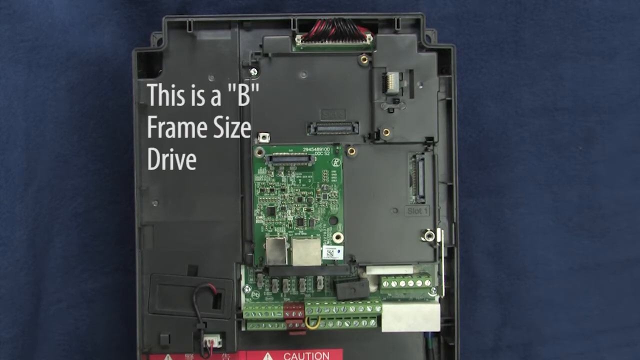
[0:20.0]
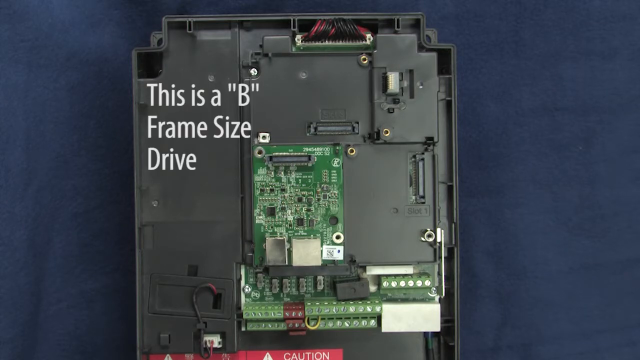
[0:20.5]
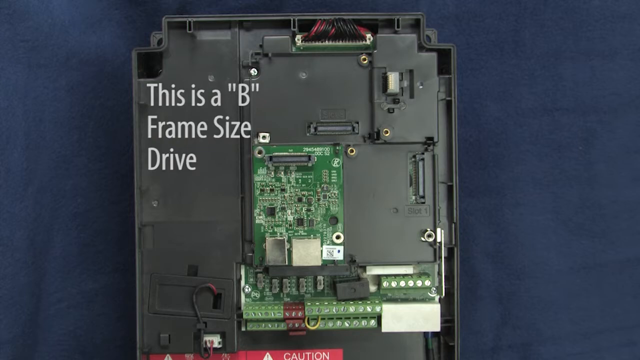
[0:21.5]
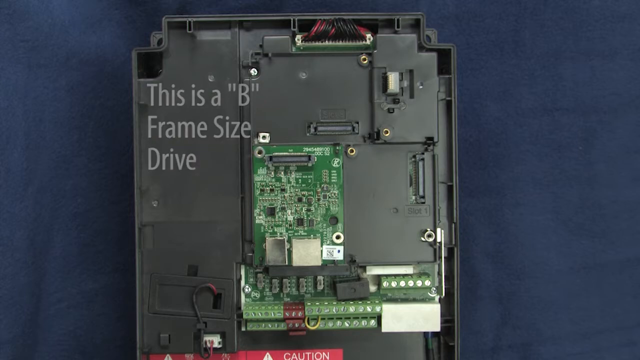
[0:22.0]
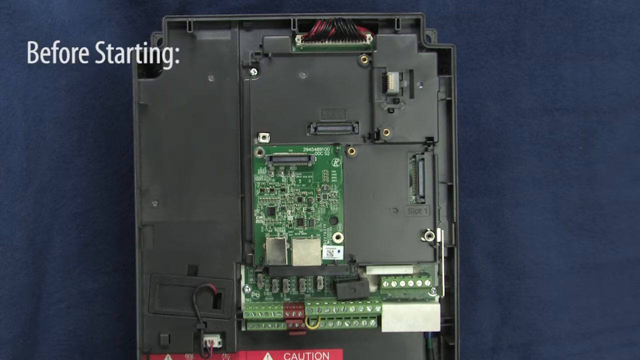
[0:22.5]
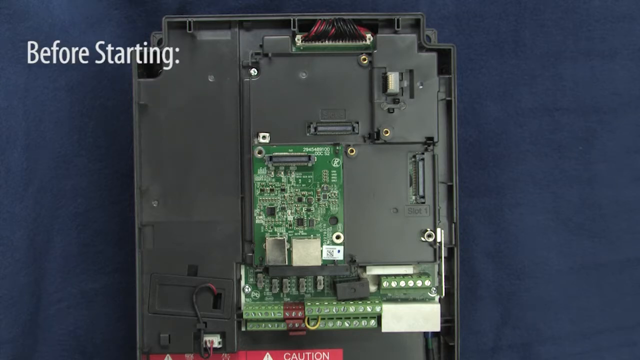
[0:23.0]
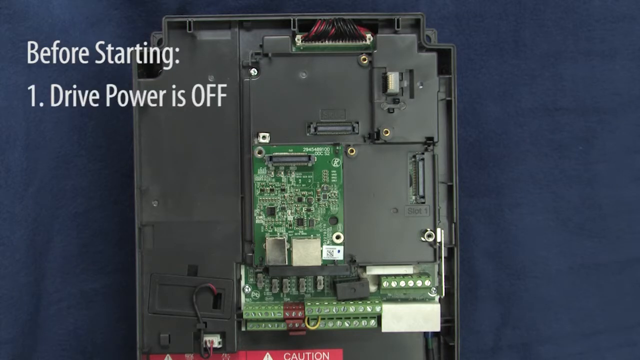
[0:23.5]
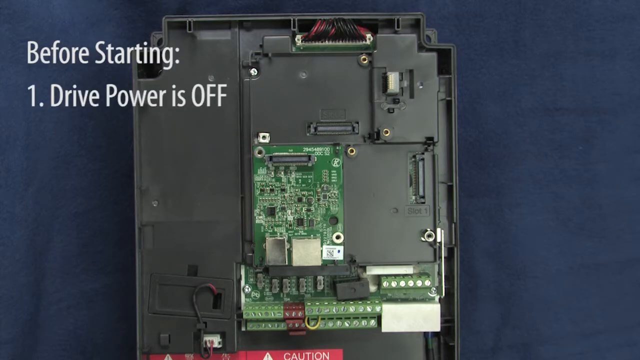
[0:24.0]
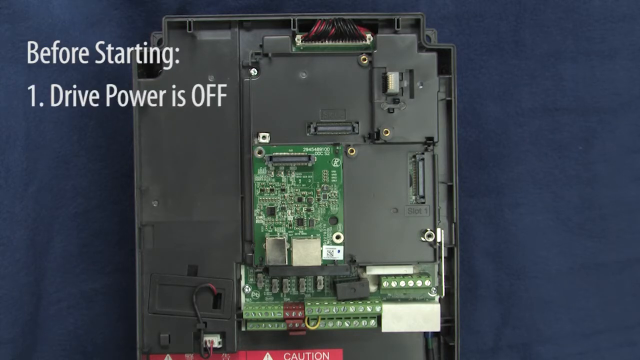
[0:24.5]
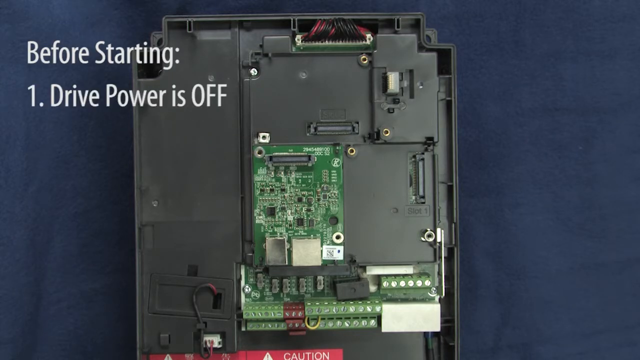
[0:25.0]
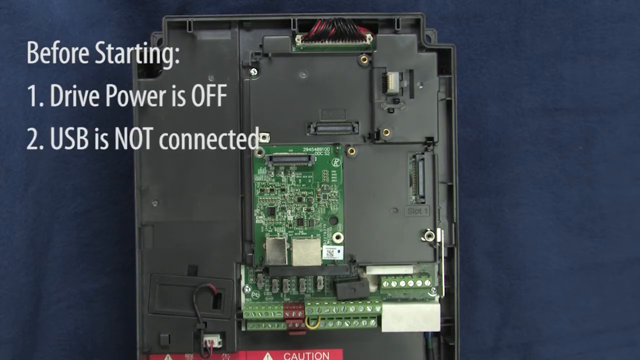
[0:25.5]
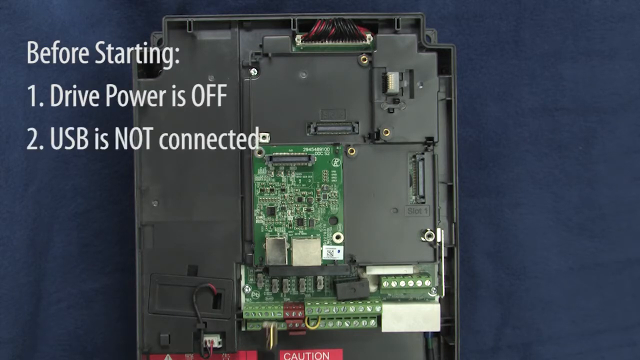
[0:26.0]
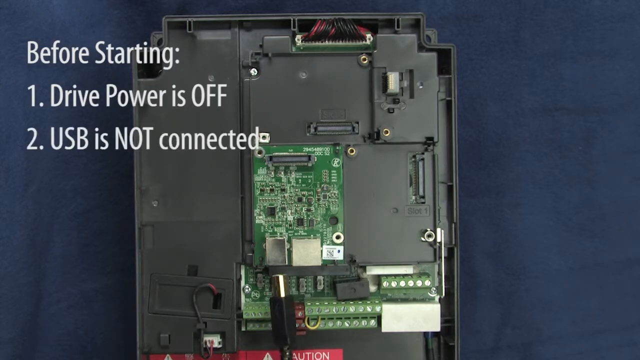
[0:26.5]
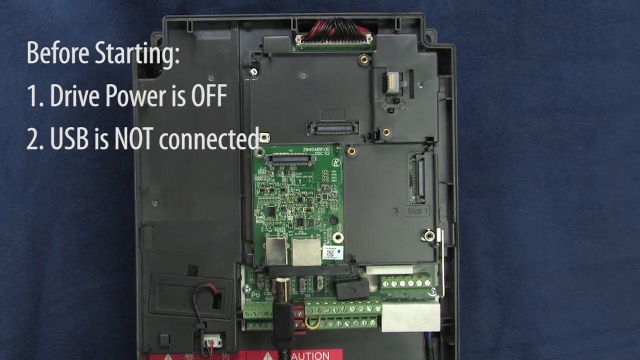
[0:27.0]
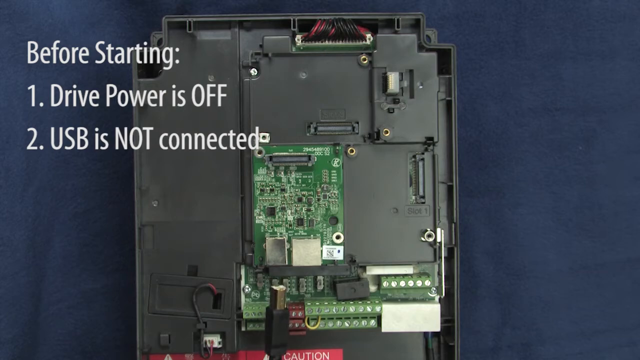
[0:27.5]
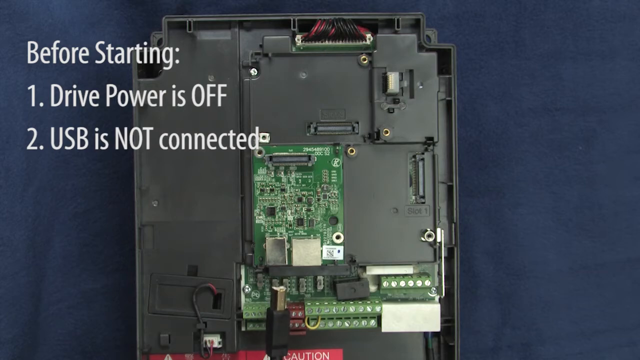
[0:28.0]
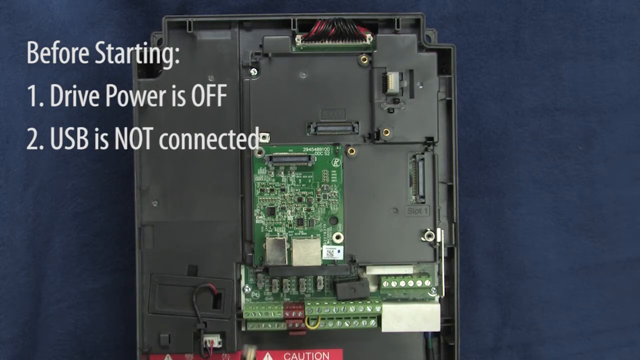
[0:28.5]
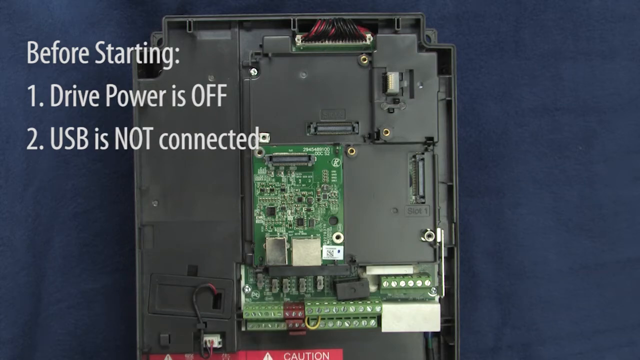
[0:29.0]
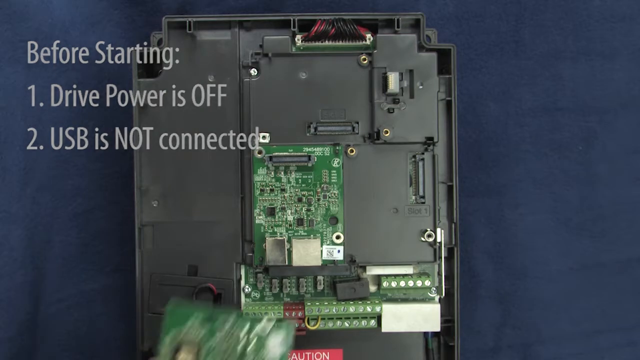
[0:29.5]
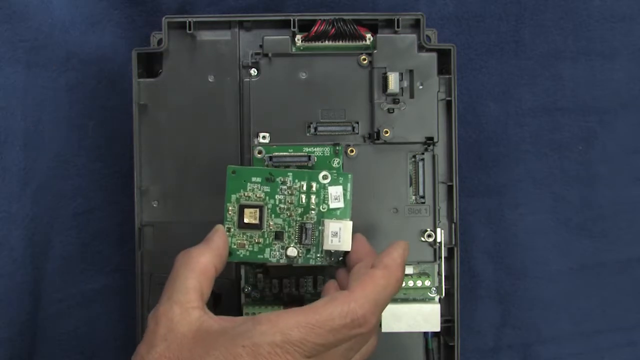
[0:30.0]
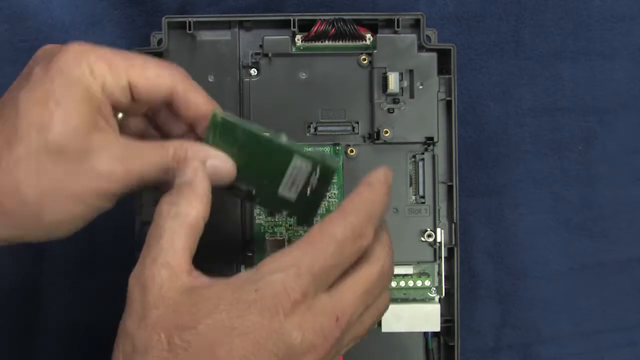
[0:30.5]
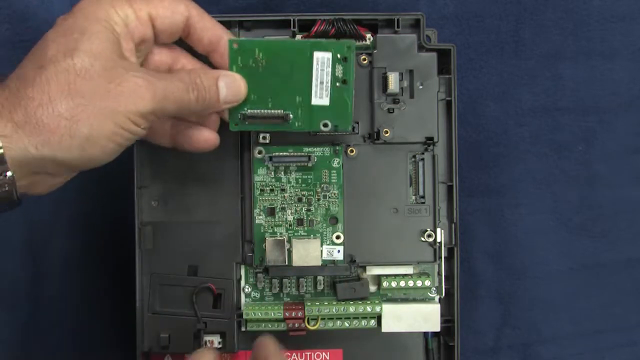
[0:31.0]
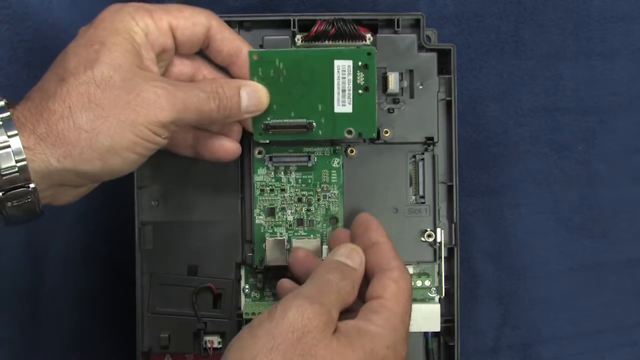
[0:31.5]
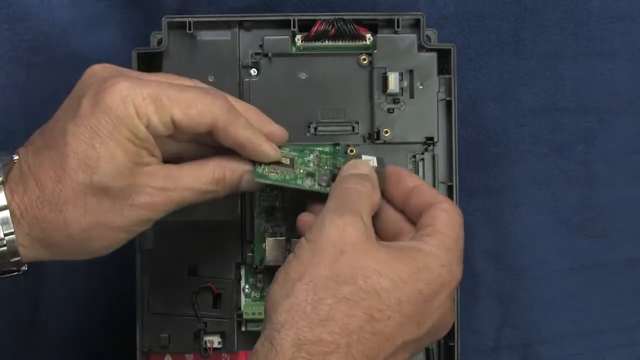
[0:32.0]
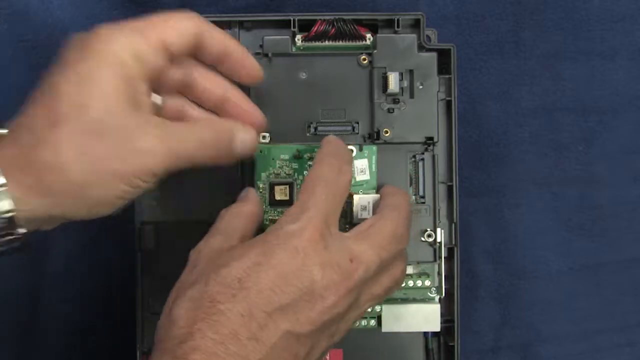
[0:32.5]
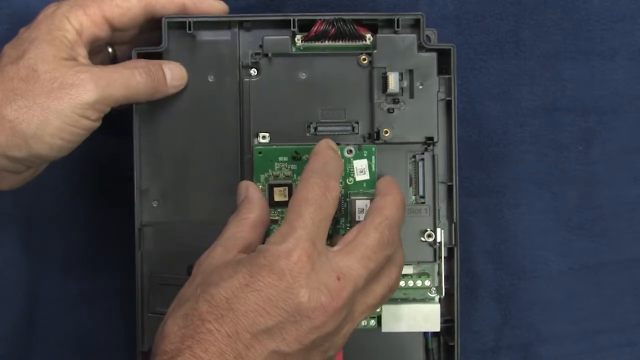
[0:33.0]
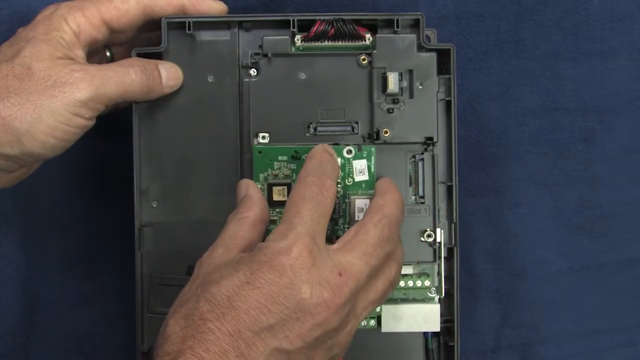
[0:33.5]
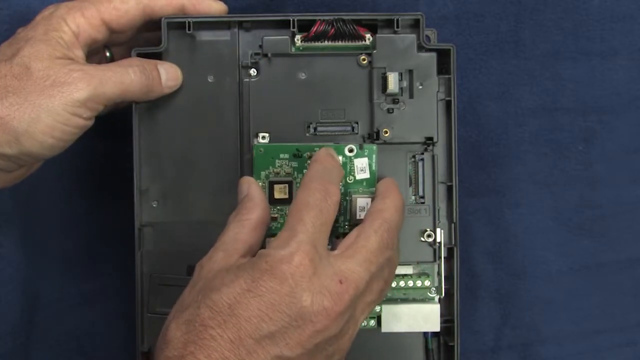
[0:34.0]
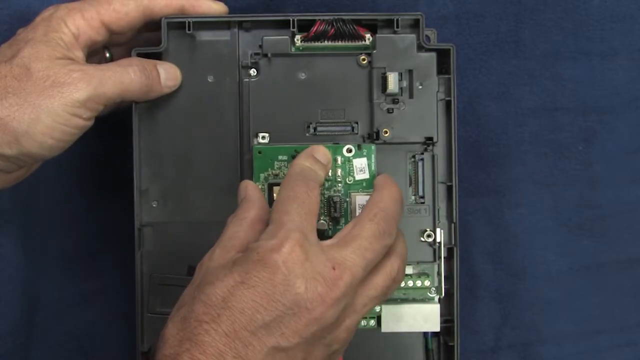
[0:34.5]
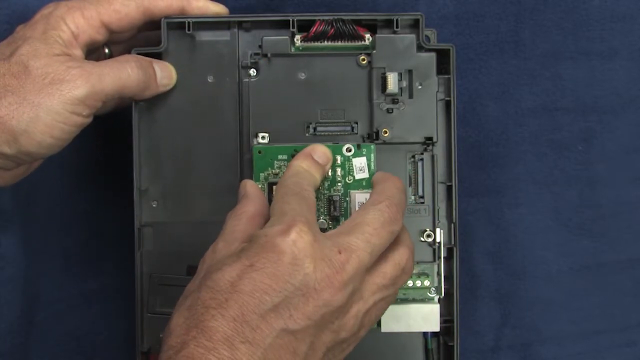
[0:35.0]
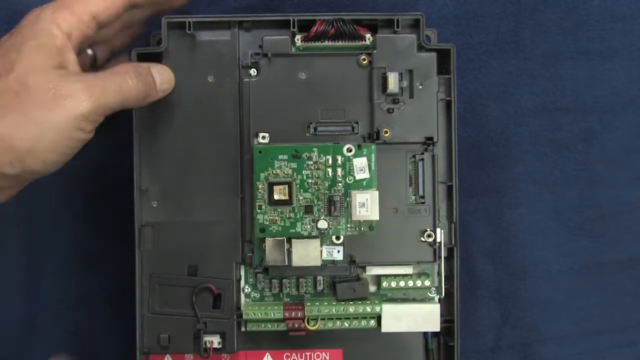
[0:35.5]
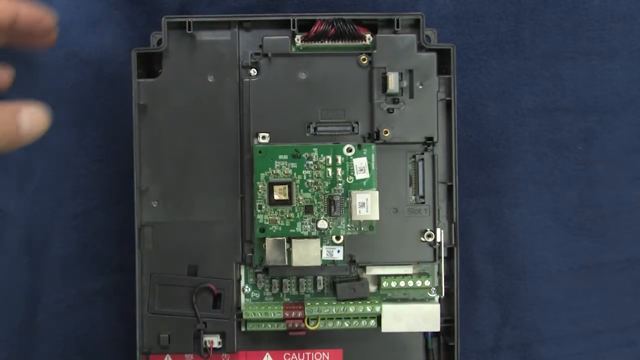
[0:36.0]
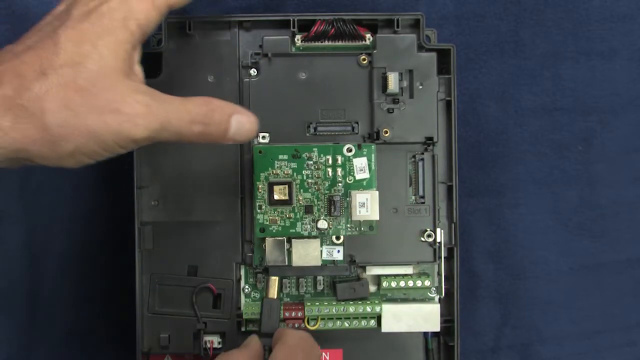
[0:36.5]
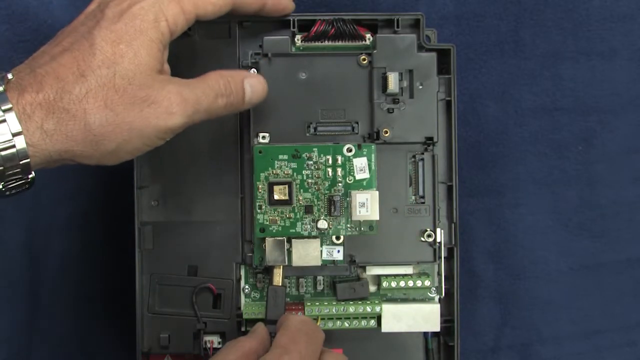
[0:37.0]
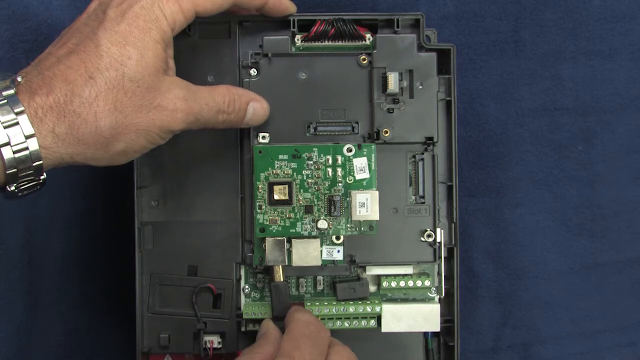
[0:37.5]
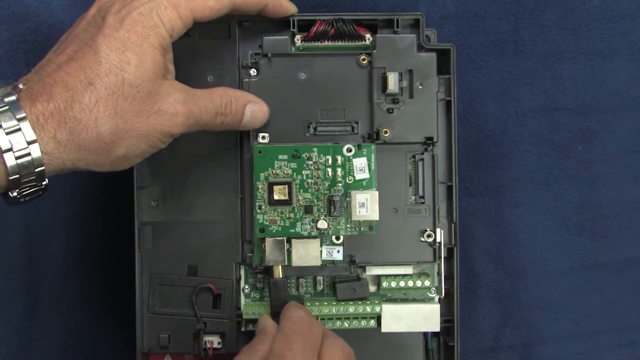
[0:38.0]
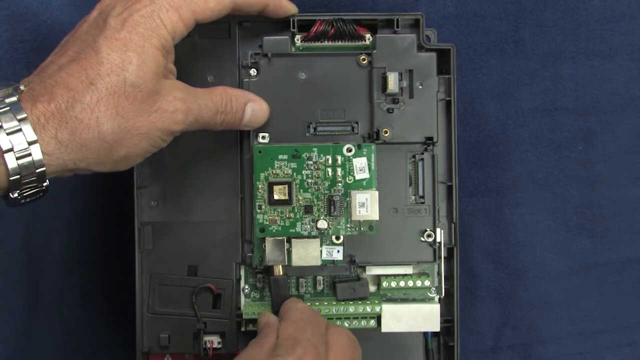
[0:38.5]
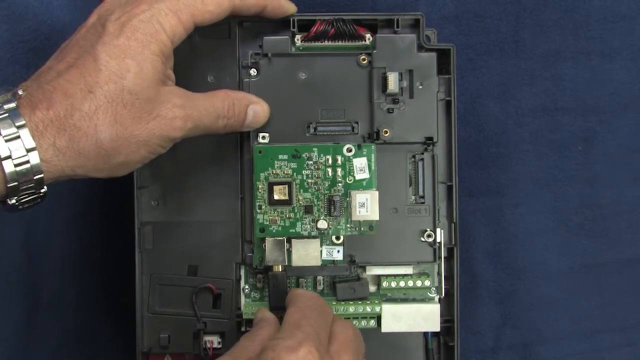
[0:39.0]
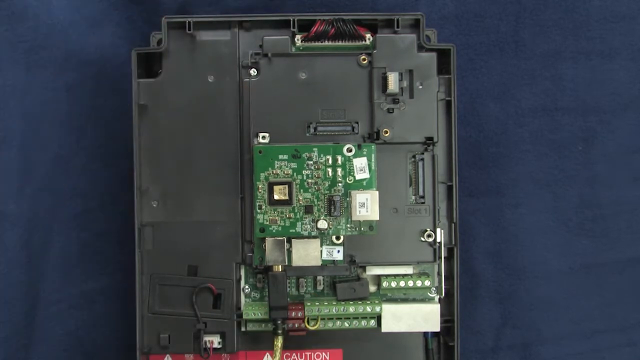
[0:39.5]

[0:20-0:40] Text on screen reads "before starting," followed by numbered steps: drive power is off, and the USB is not connected. Someone holds the USB. Text again states that this is a B-frame size drive. Another card is held ready, and it is placed on top of the existing card, apparently adding something like a memory card. Once the card is on top, the USB is plugged back in, and a green power light apparently comes on.